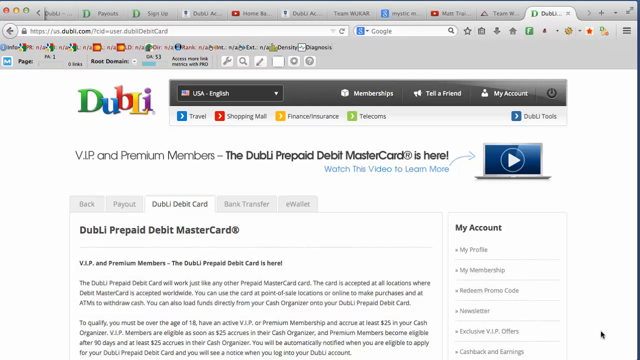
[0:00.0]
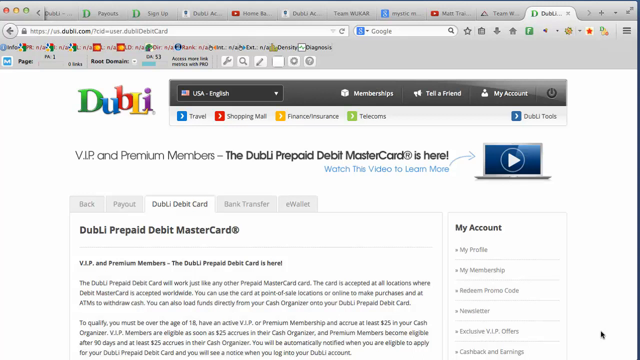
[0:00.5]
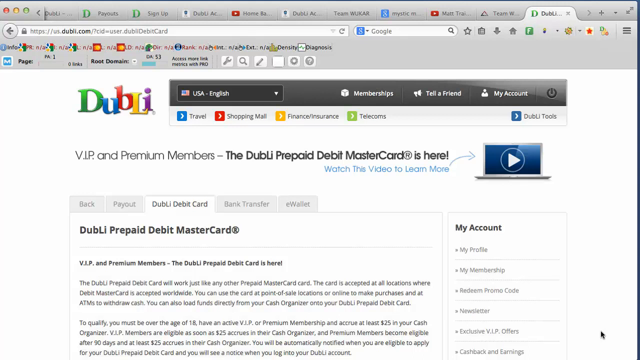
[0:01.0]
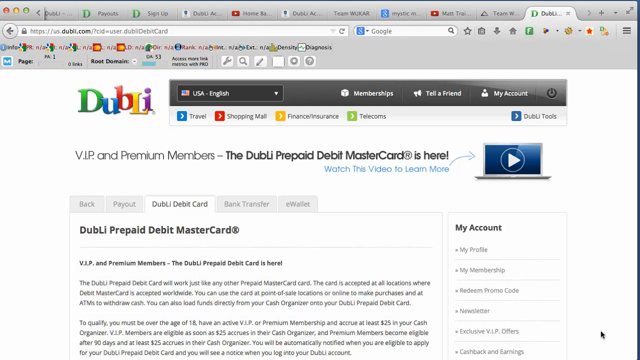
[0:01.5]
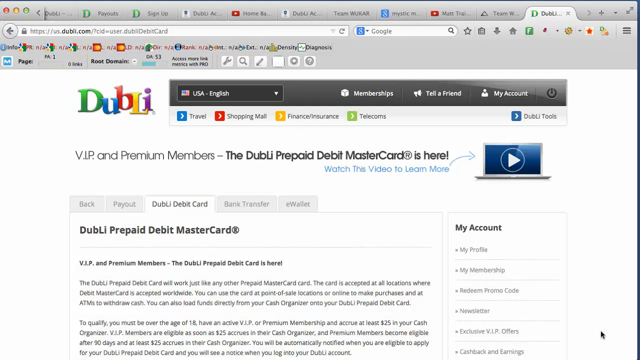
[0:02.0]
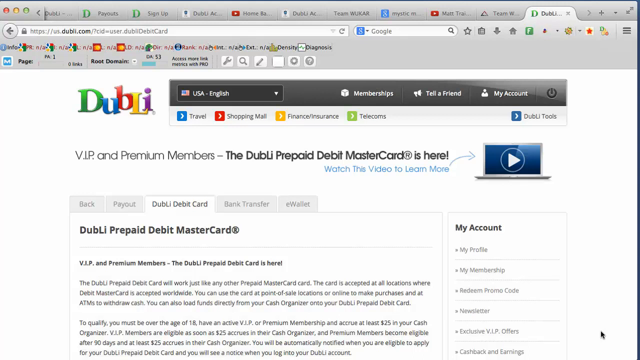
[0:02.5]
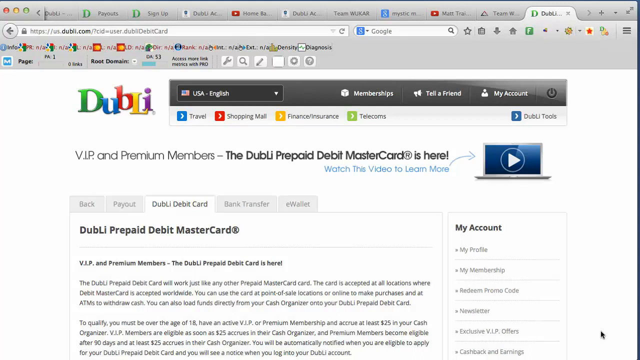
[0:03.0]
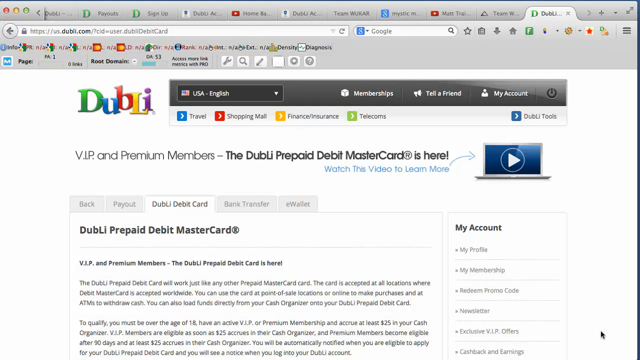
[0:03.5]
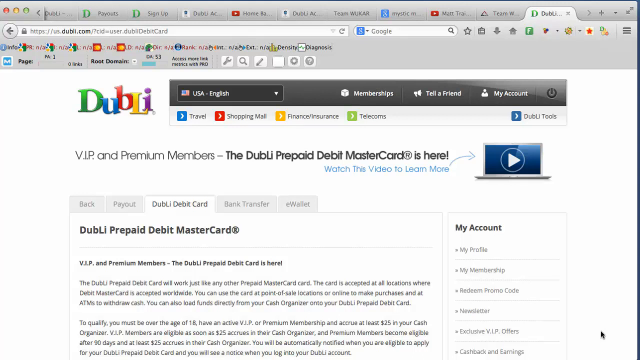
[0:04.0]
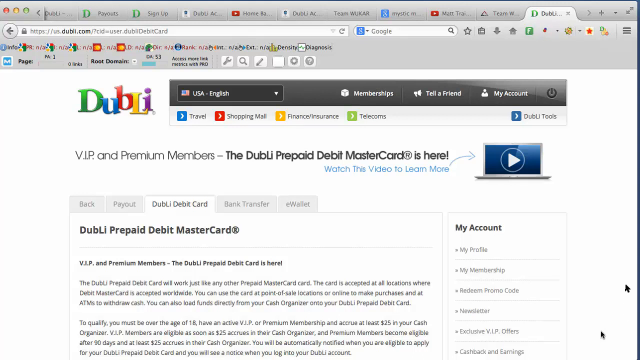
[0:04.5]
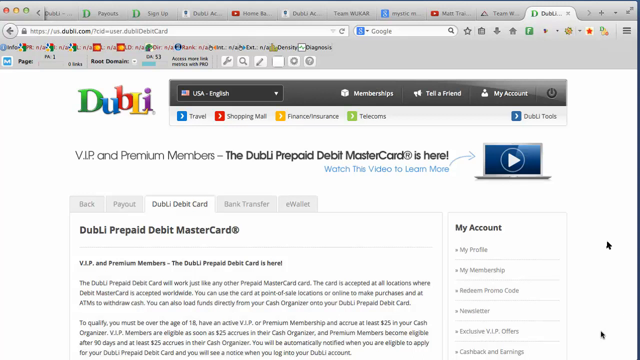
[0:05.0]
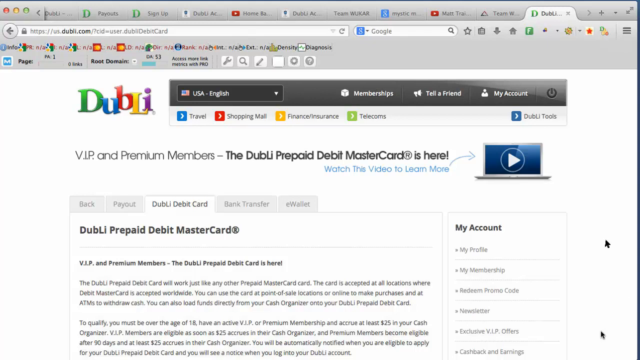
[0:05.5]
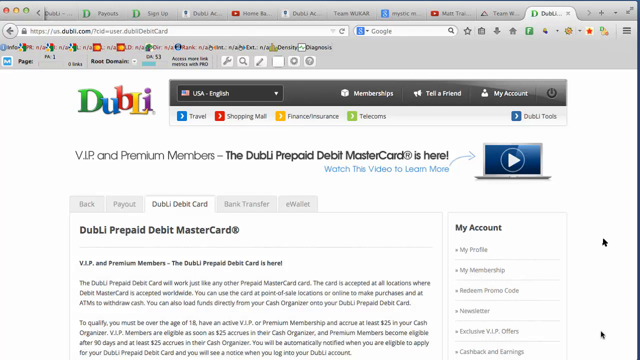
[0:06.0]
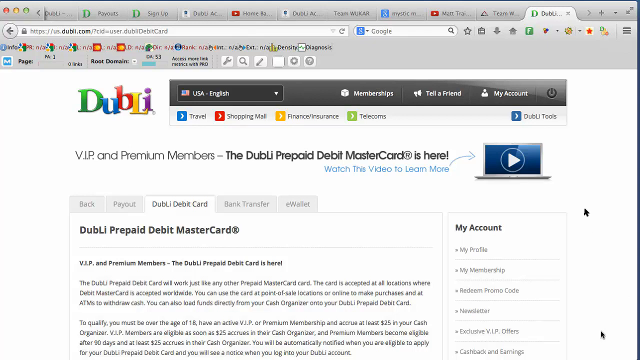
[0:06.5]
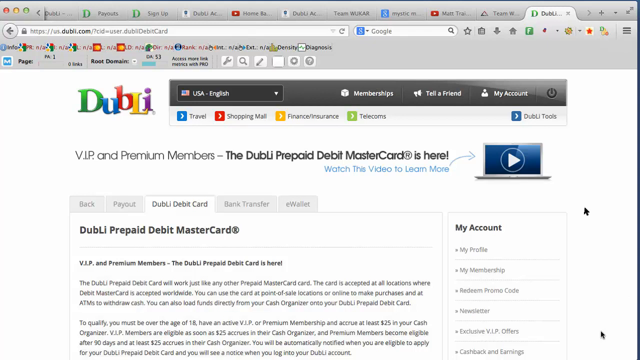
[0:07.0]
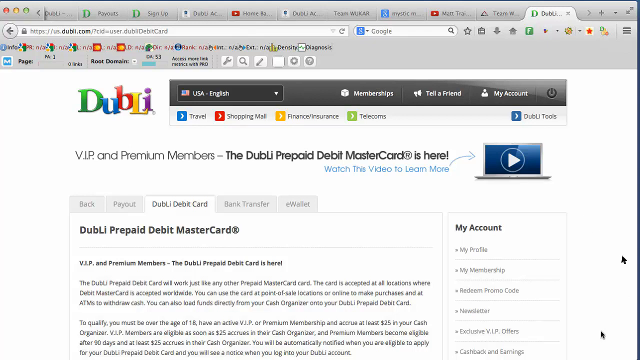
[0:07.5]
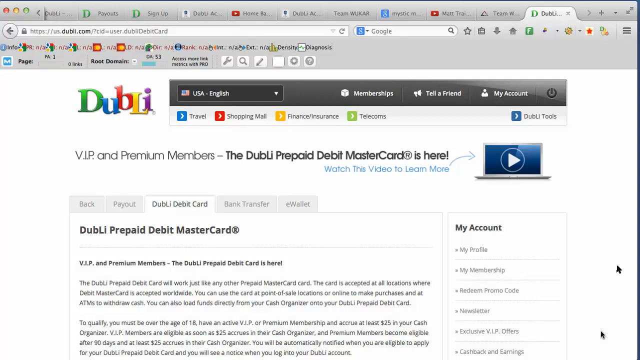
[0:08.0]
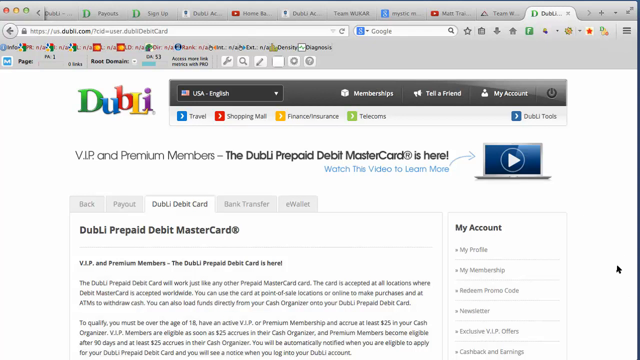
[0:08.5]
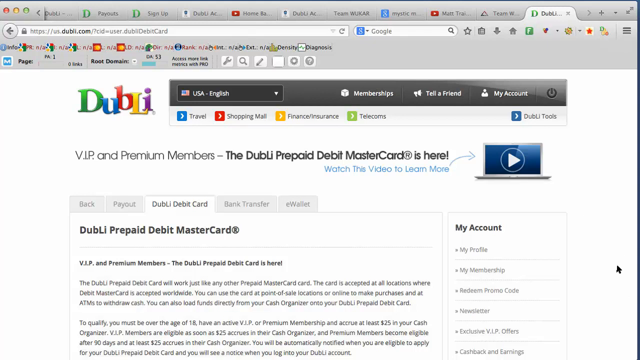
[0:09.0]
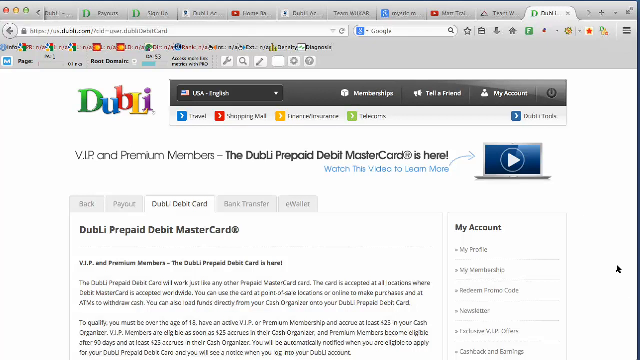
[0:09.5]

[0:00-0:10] A website shows the text "VIP and premium members the DUBLI prepaid debit mastercard is here." Underneath it, in blue, is "watch the video to learn more" with a blue arrow pointing to something like a laptop with a blue screen that serves as a play button. Below that is "DUBLI prepaid debit mastercard." The words are small and hard to see. The mouse cursor moves, and the right side of the page is black. The text appears to read "VIP and premium members - the DUBLI prepaid debit card is here!" followed by text saying "the prepaid card will work just like any other prepaid mastercard. The card is accepted at all locations where debit mastercard is accepted worldwide." It apparently goes on to say the card can be used at point of sale locations or online to make purchases, and, though hard to see, at an ATM to withdraw cash.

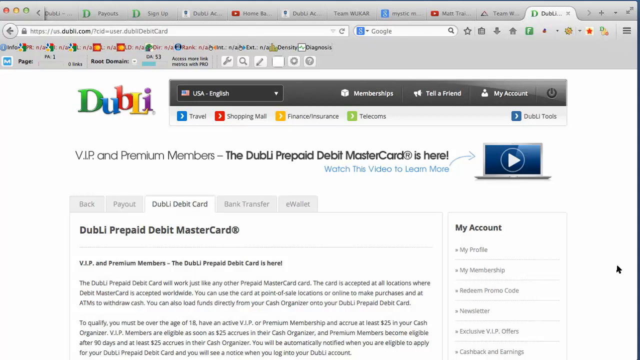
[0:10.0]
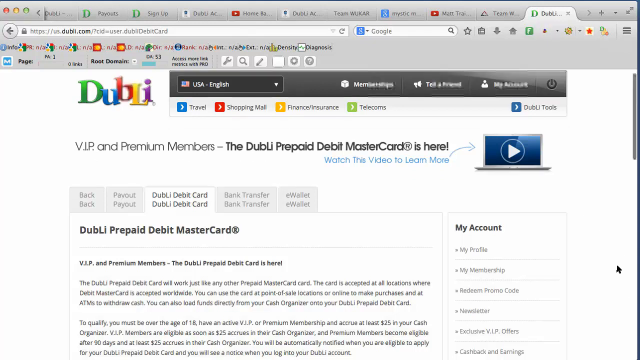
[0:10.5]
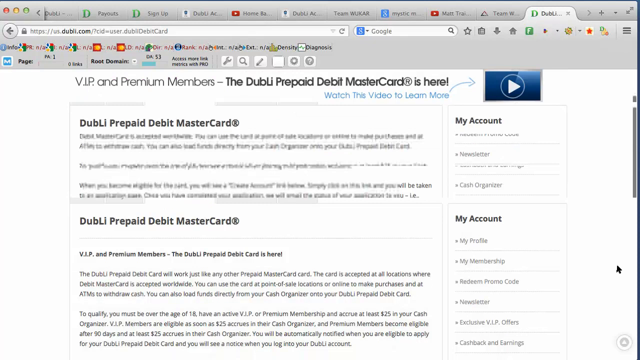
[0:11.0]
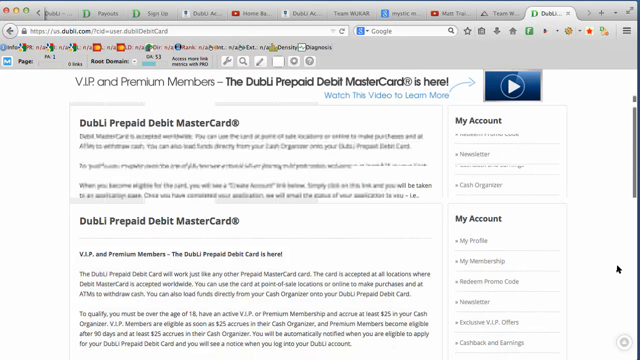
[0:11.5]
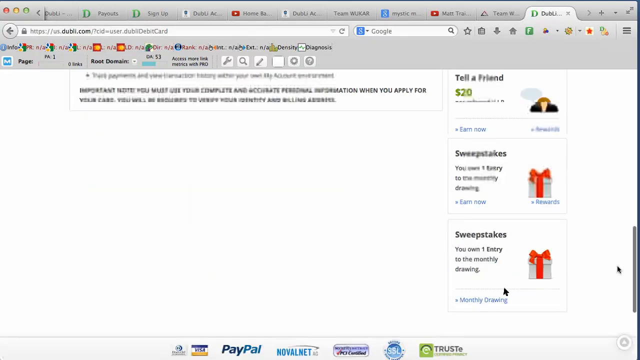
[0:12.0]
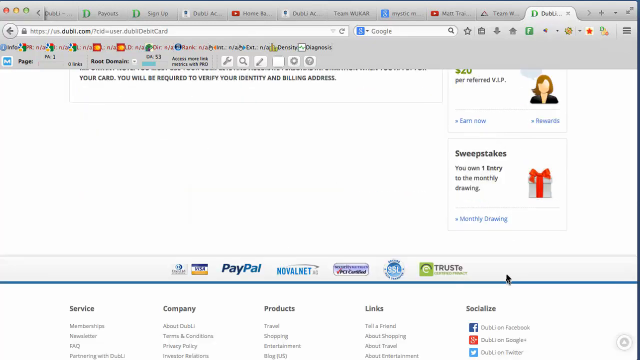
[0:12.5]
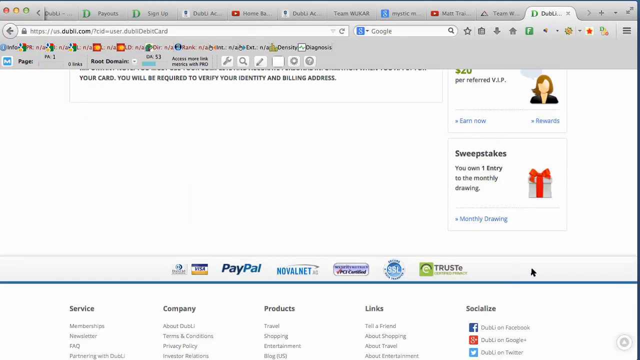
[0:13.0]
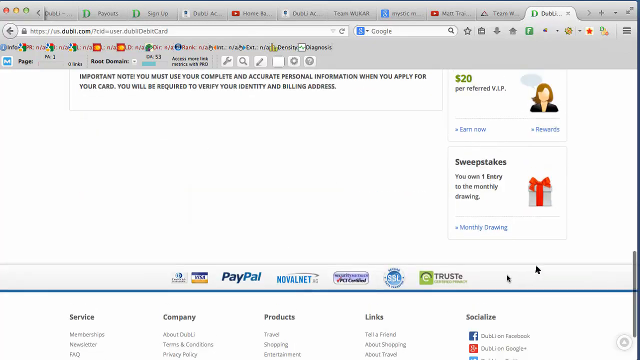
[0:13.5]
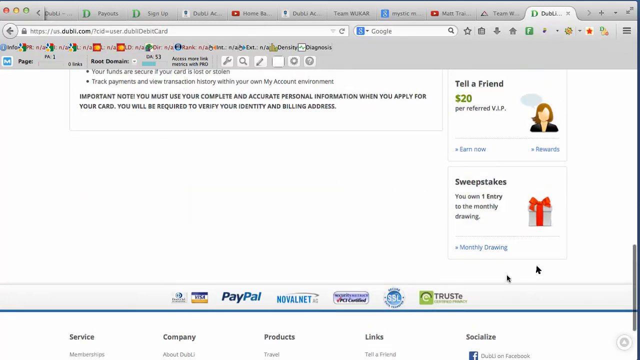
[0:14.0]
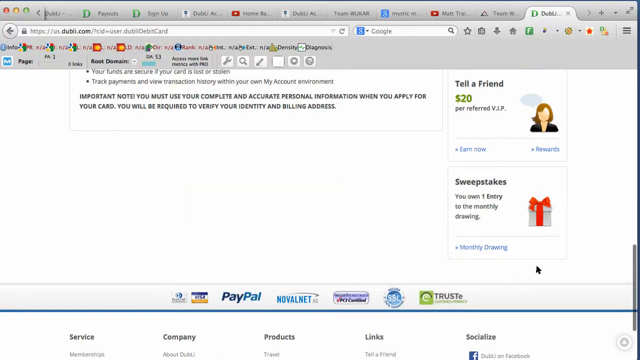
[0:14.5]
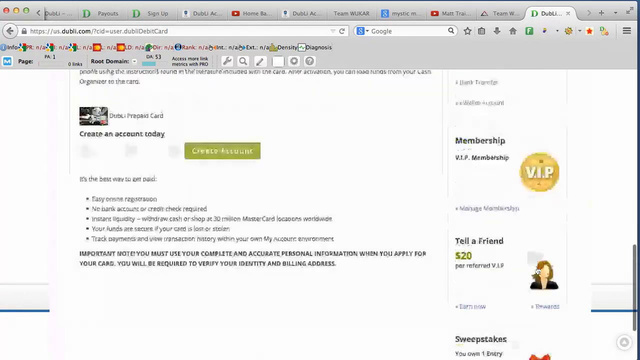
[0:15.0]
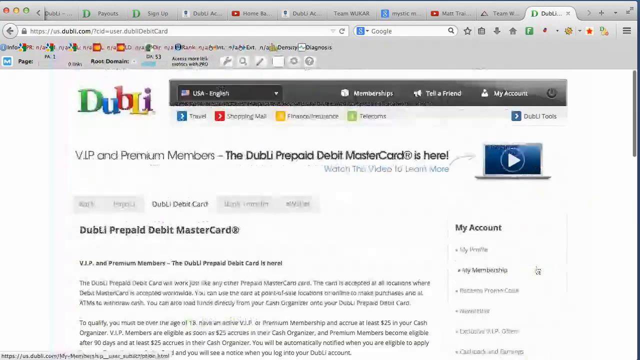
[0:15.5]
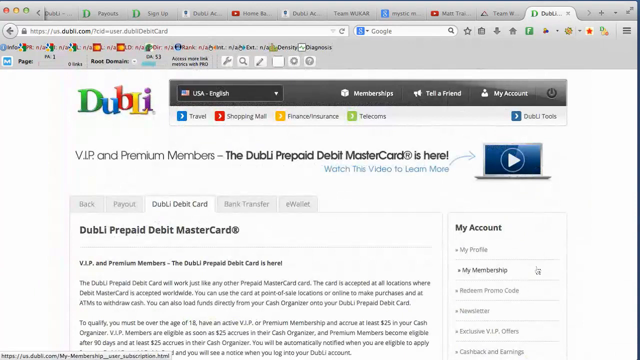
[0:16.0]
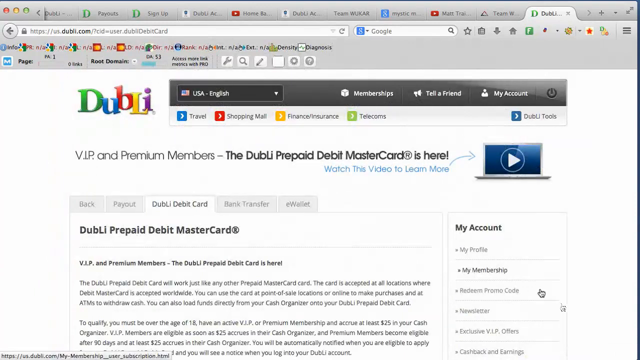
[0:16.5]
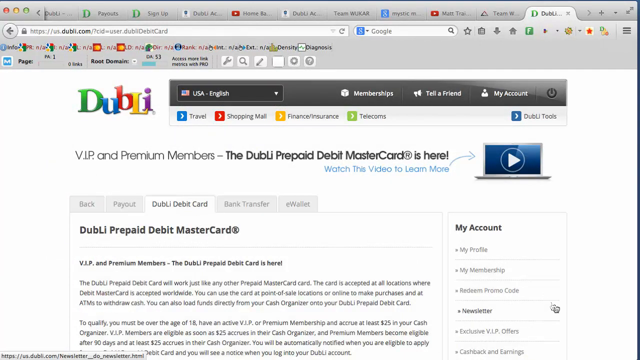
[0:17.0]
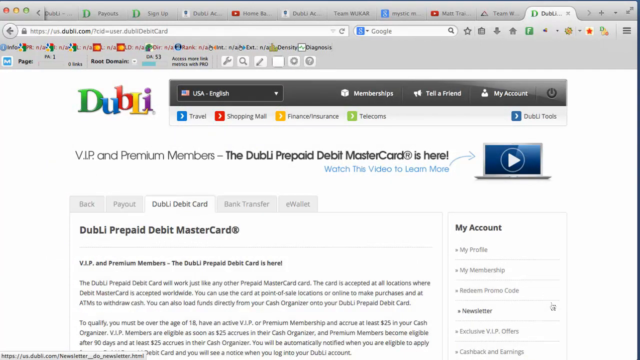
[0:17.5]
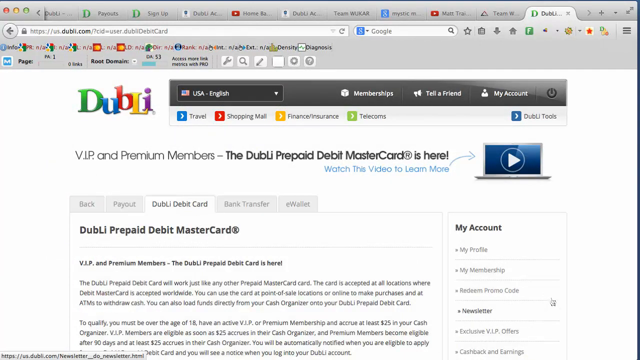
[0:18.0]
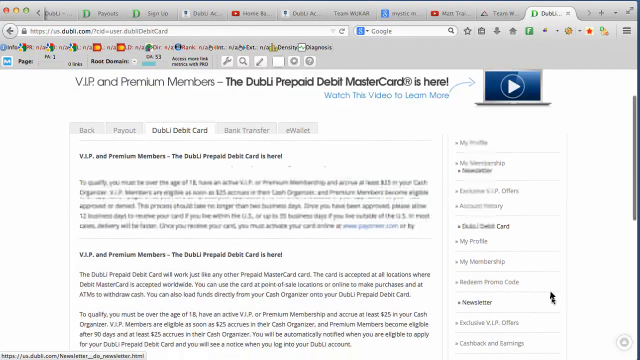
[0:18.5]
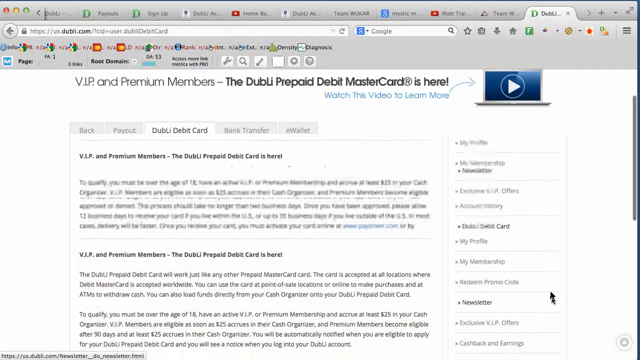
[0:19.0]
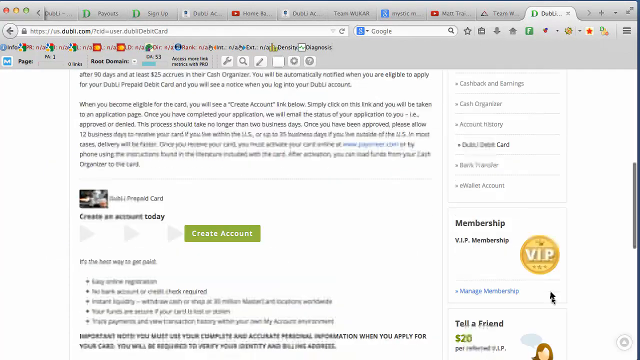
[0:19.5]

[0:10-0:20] The page shows "DUBLI prepaid debit MasterCard" in bold. In a smaller but still bold font is "VIP and premium members" and "the DUBLI prepaid debit card is here." Below, in black non-bold text that is hard to see, it says that the prepaid card will work just like any other prepaid MasterCard, that the card is accepted at locations where debit MasterCard is accepted worldwide, and that it can be used at point of sale locations and online to make purchases and at ATMs to withdraw cash. The person scrolls down a little on the side, showing "sweepstakes," "sweepstakes" and "tell a friend," then scrolls back up a little.